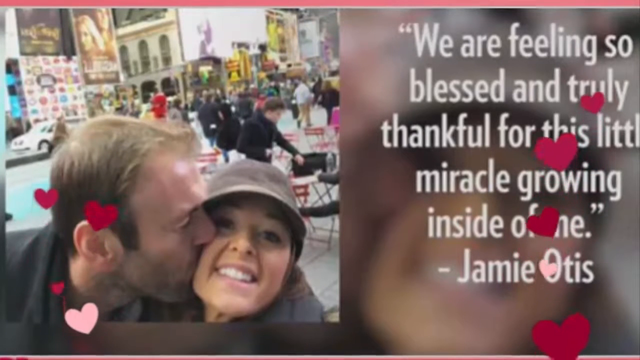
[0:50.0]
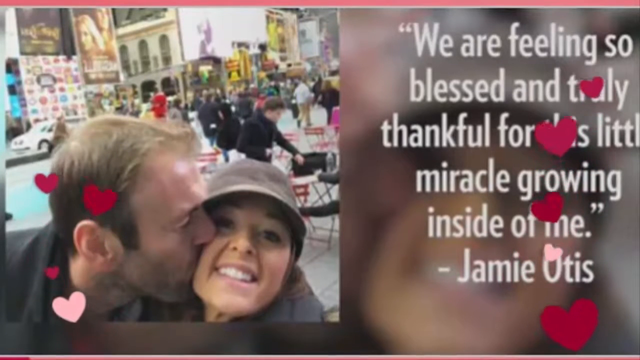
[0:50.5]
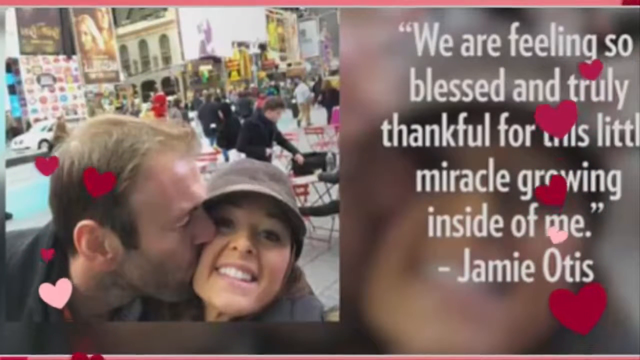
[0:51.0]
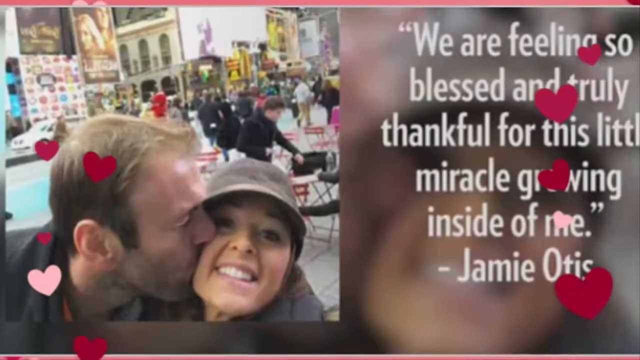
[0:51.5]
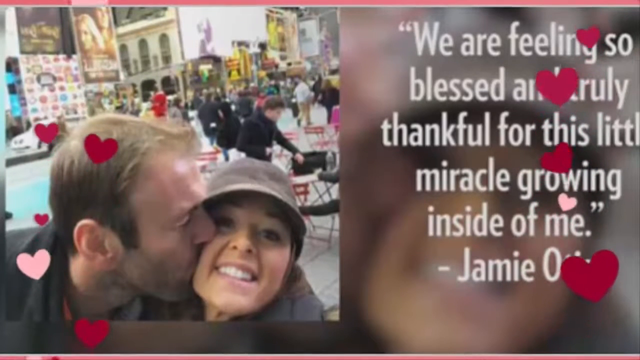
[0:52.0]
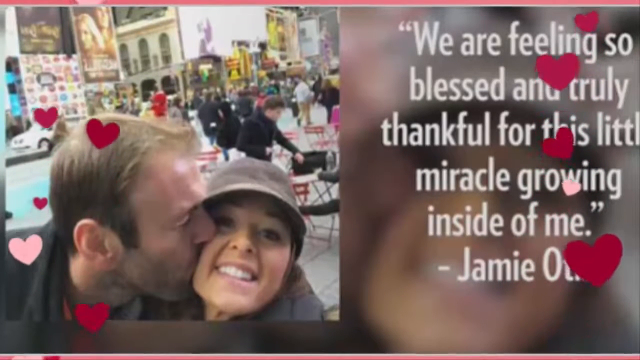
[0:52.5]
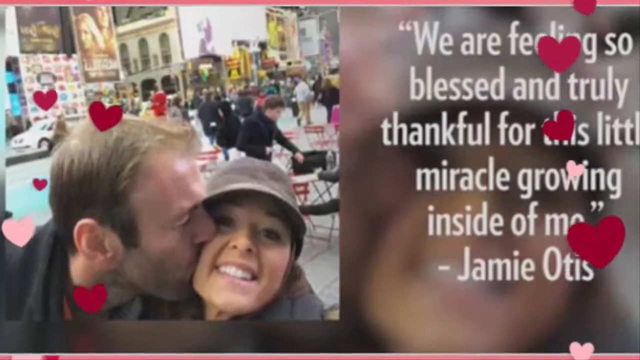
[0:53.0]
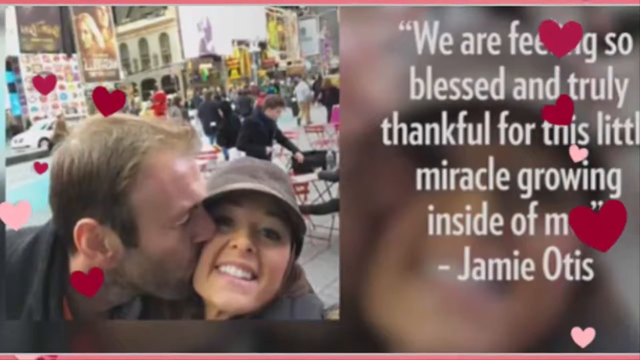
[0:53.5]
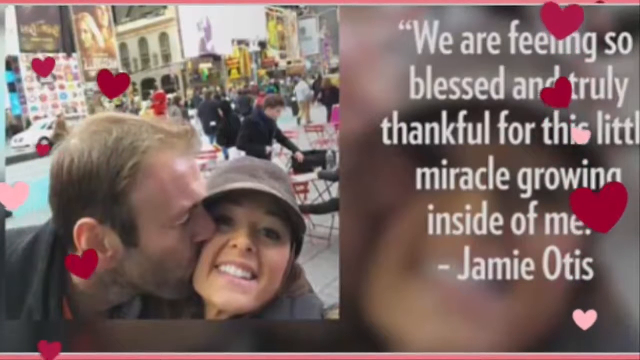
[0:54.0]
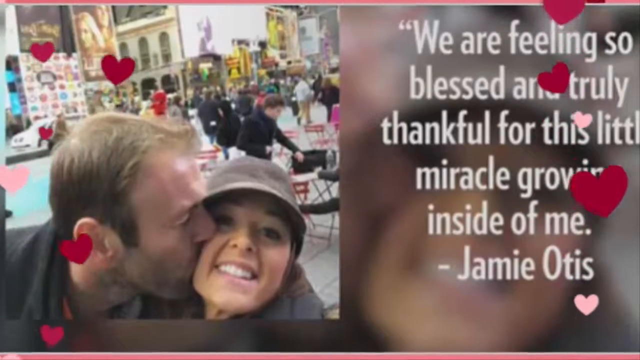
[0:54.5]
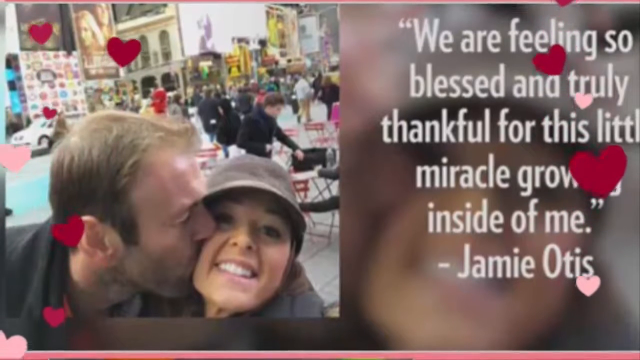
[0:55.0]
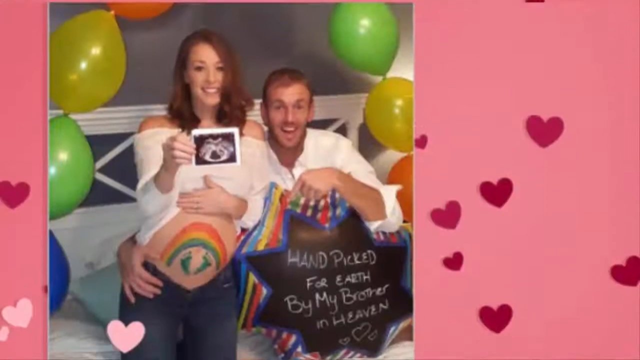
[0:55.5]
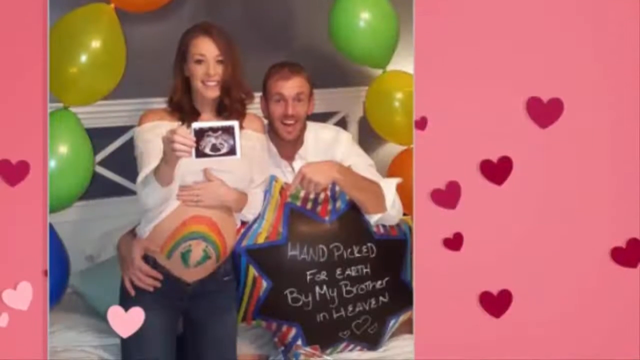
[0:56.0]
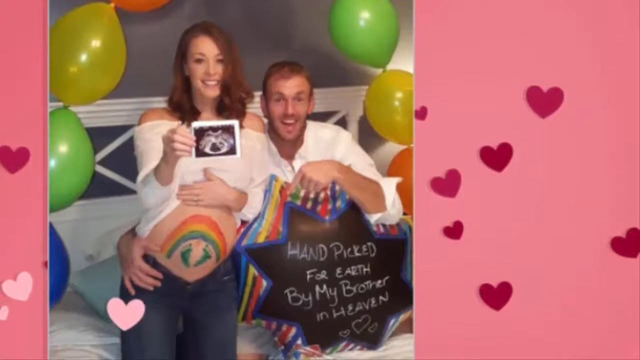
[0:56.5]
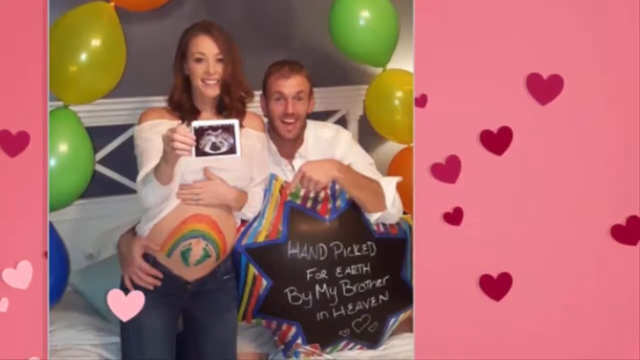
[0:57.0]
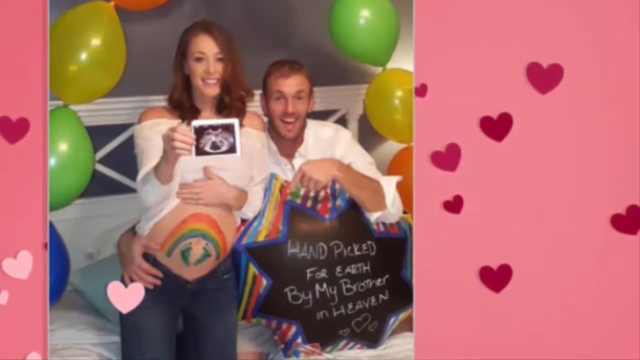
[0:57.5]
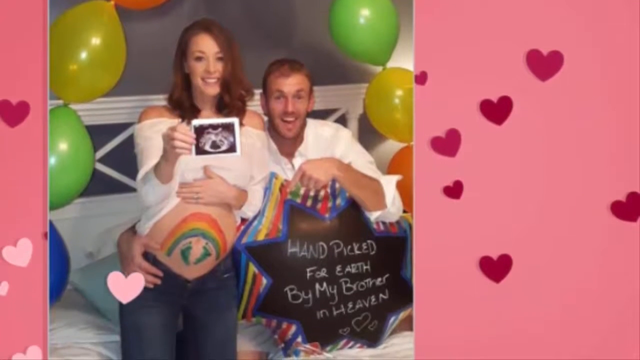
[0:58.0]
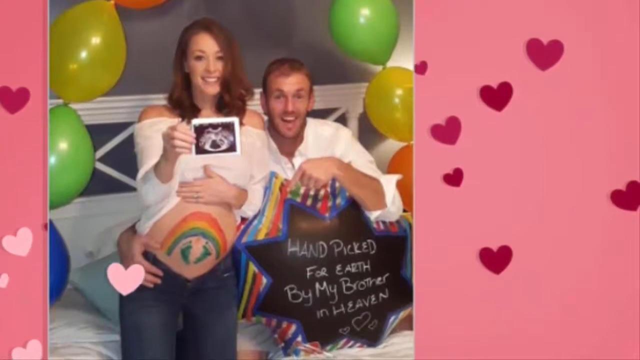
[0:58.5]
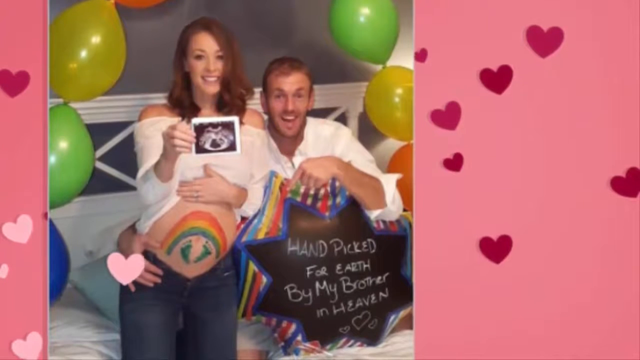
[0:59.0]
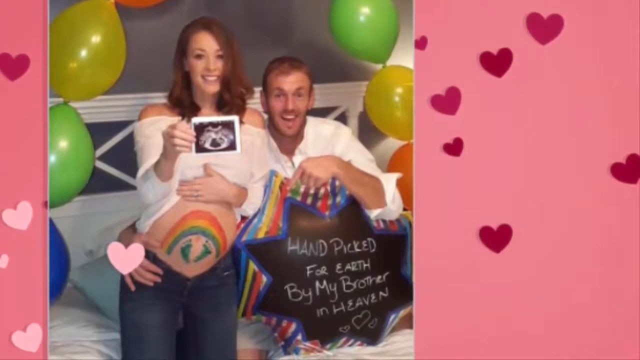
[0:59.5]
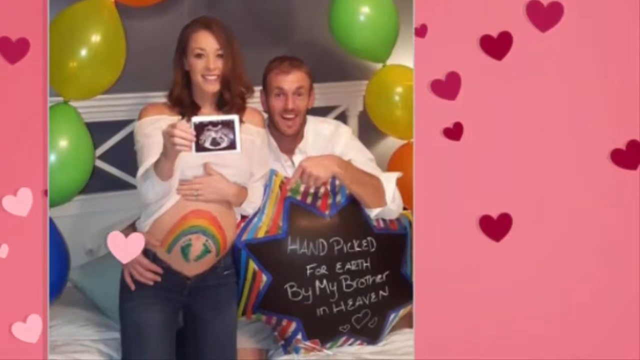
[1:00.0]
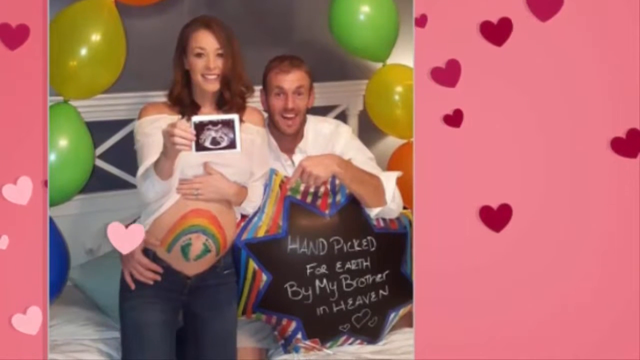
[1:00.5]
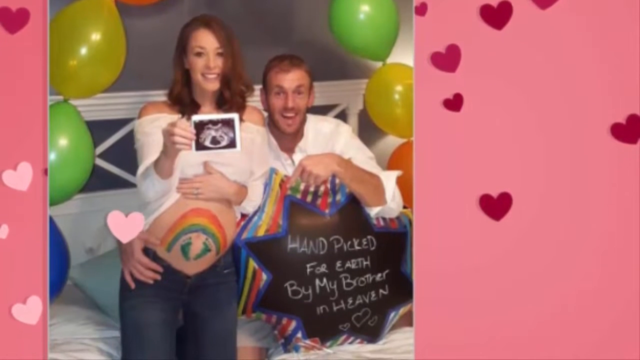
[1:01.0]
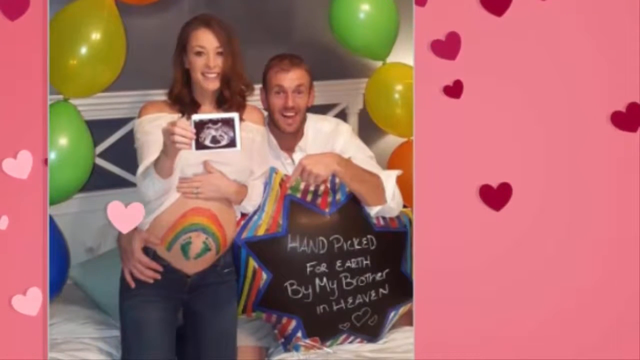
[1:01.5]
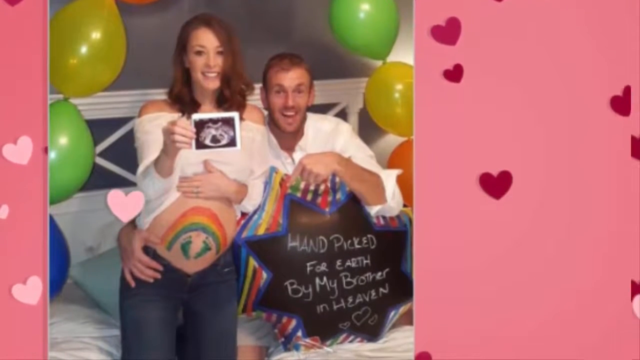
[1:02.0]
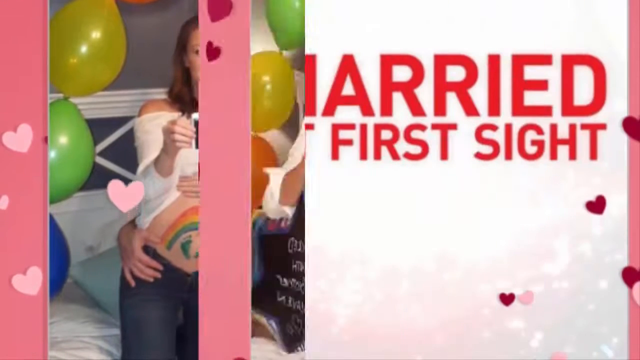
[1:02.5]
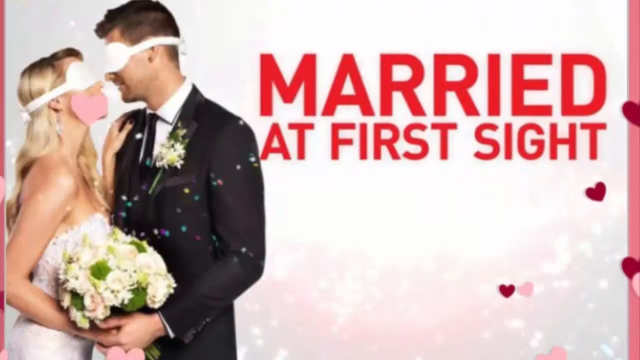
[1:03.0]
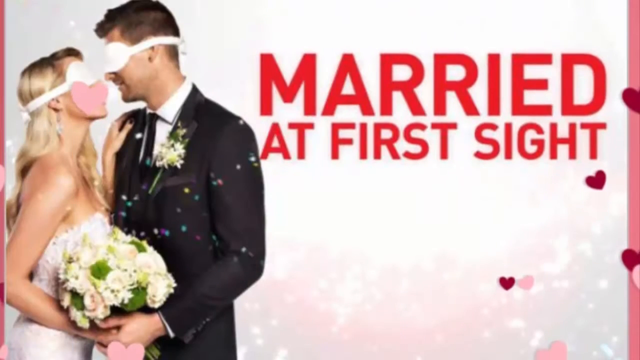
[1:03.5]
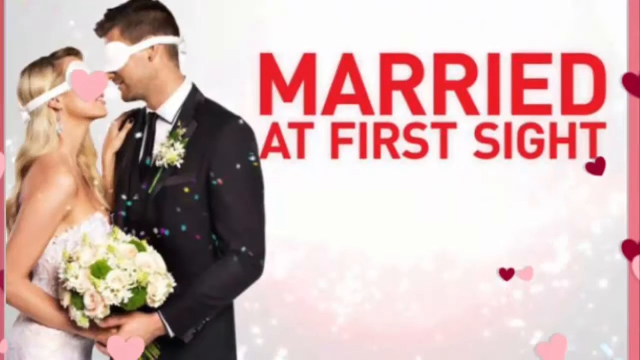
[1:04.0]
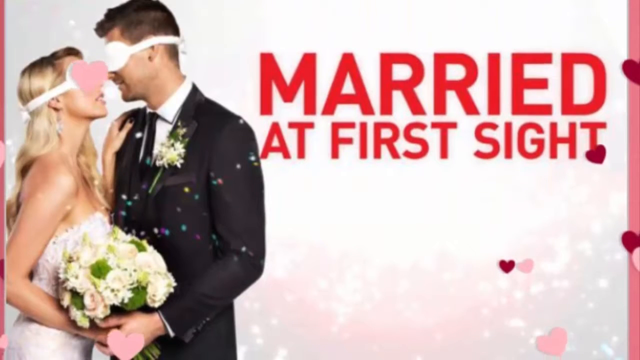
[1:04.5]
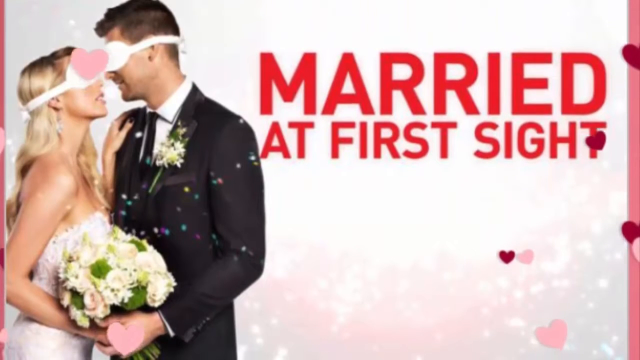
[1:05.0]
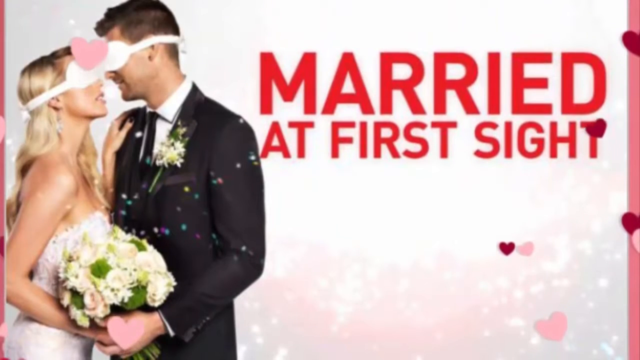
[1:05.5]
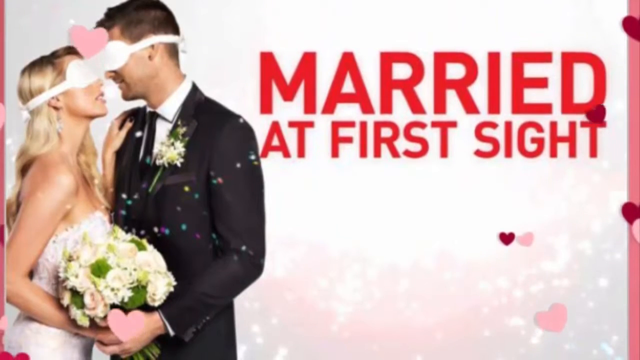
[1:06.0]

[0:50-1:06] The couple is in a public setting, with people behind them busy engaging in several activities. The couple seems to be in love and is kissing. A caption reads "we are feeling so blessed and really thankful for this little miracle growing inside of me", a quote by Jamie Otis, while love emojis pass through. Again there is the picture of the couple on the bed showing some gifts, with the lady holding what may be a picture showing the baby growing inside her stomach. Then a couple wears VR glasses, the man in a black suit and the woman in a dress, with the caption "married at first sight" on a pink background and love emojis flying through the picture.